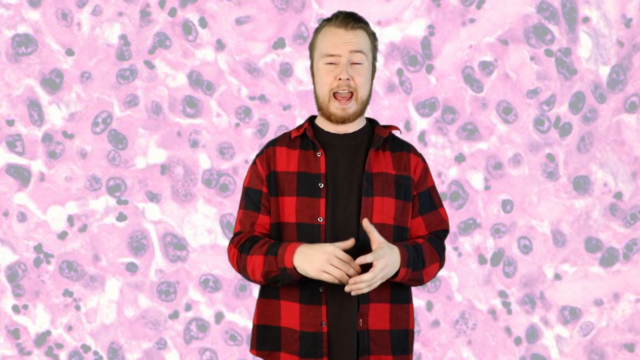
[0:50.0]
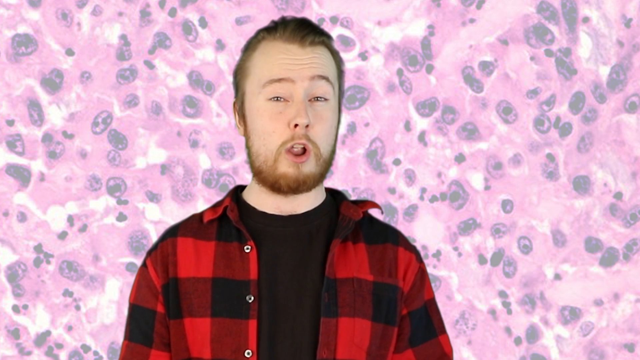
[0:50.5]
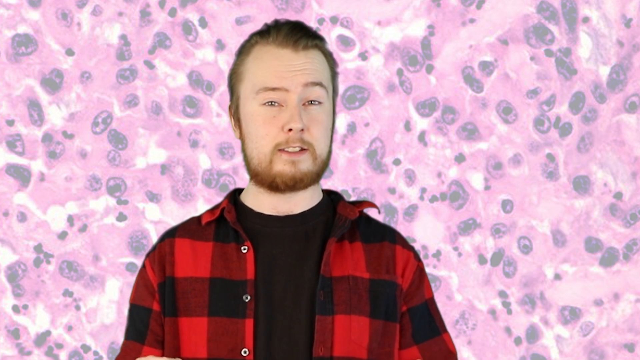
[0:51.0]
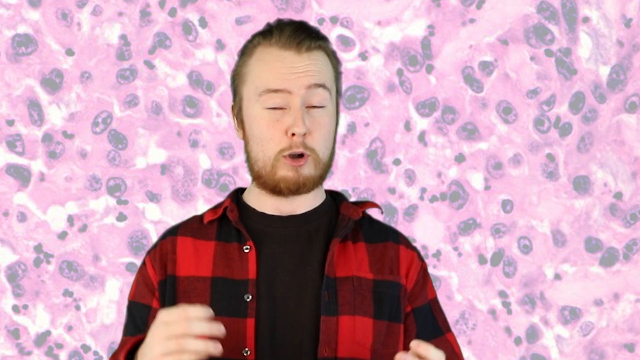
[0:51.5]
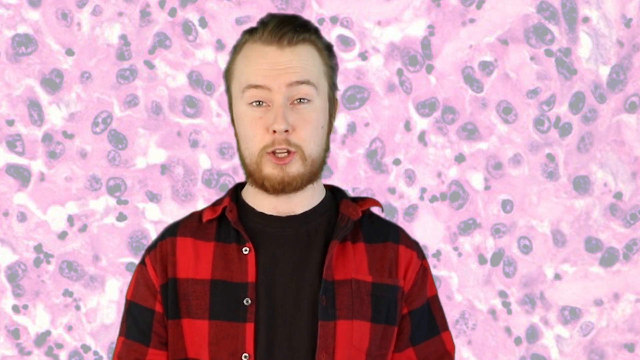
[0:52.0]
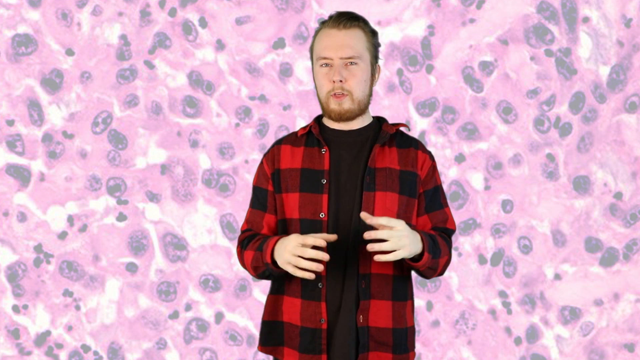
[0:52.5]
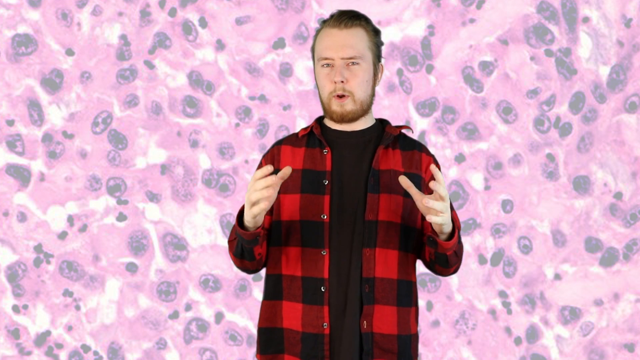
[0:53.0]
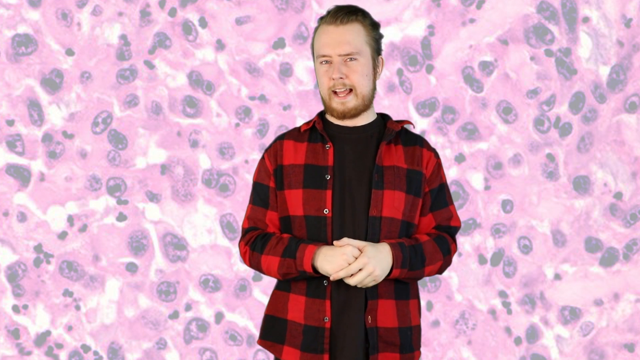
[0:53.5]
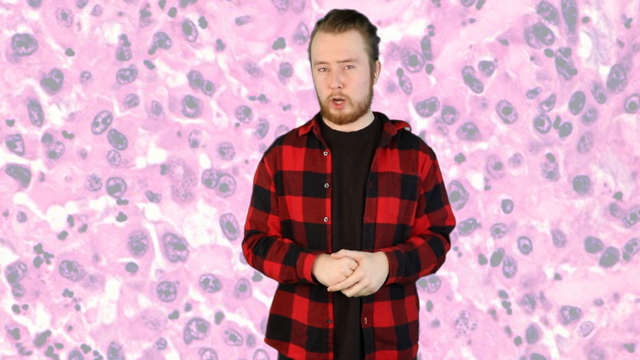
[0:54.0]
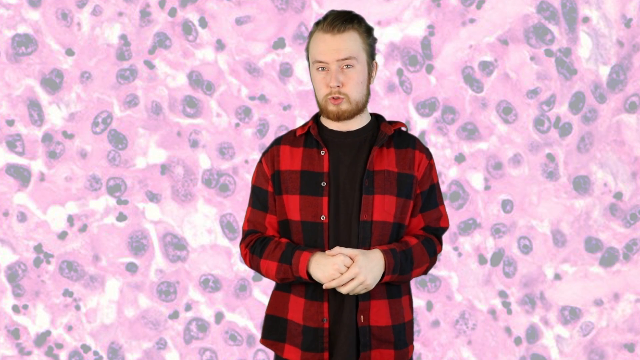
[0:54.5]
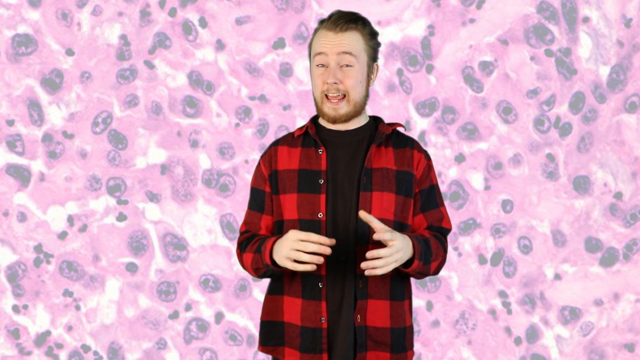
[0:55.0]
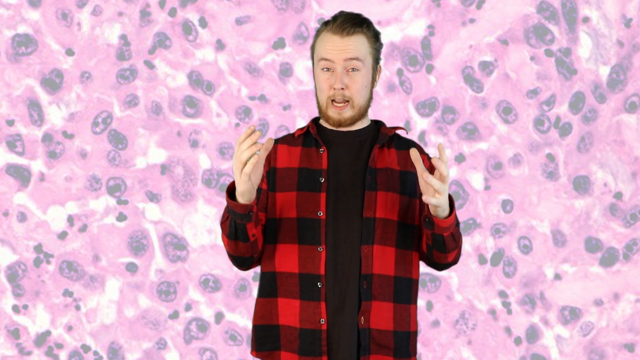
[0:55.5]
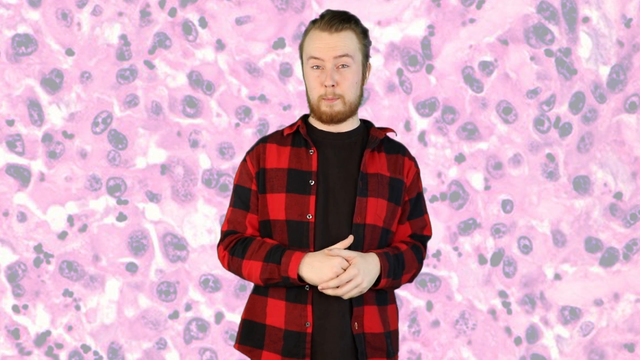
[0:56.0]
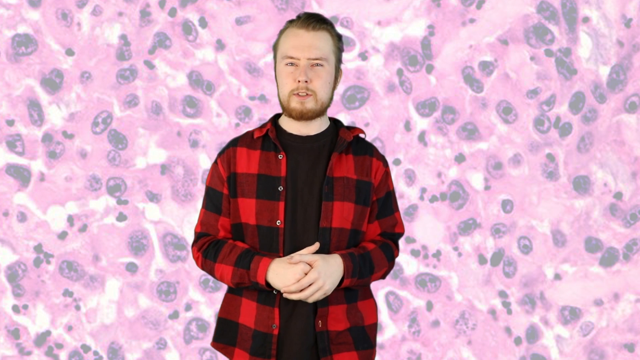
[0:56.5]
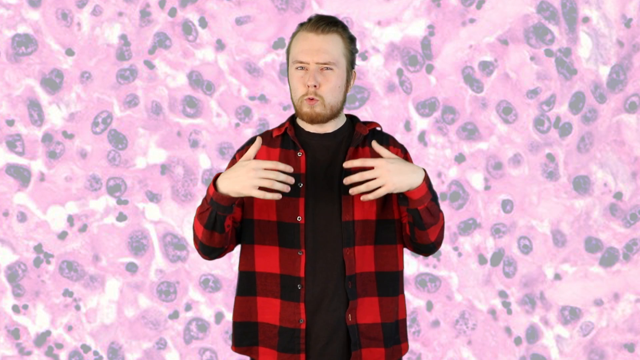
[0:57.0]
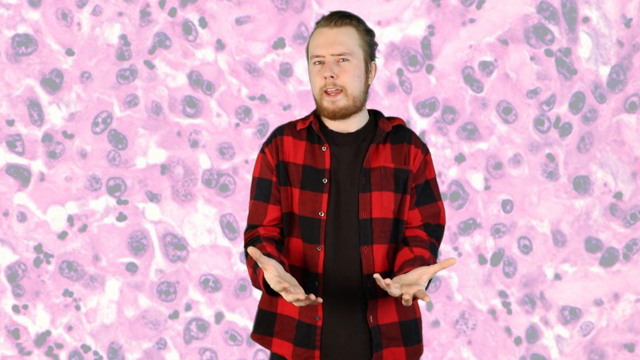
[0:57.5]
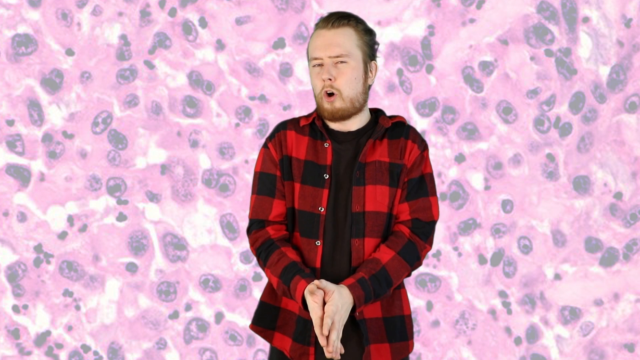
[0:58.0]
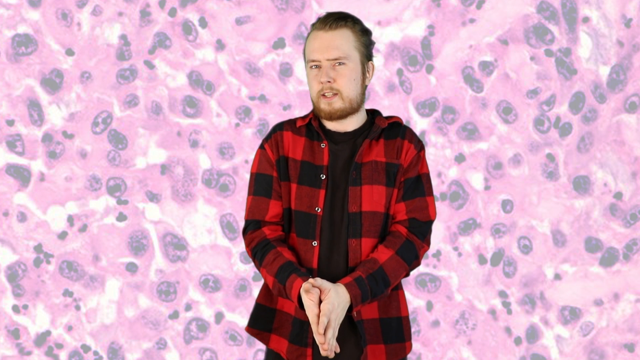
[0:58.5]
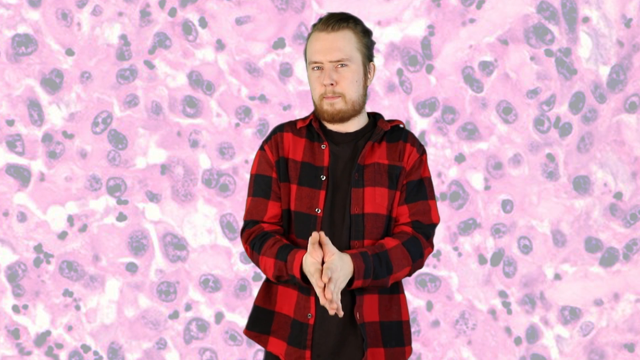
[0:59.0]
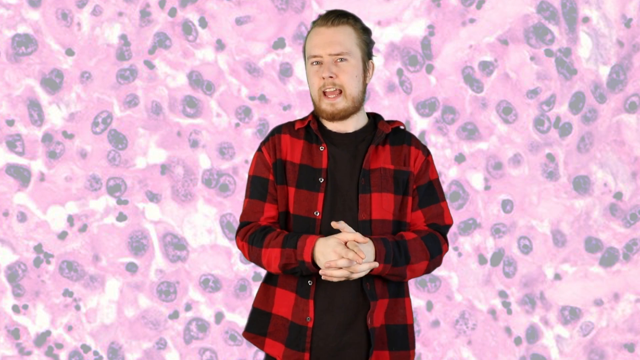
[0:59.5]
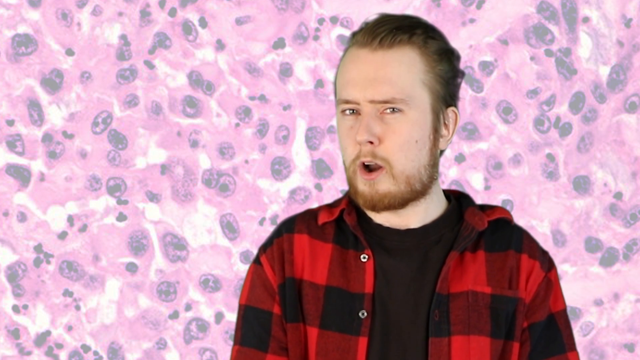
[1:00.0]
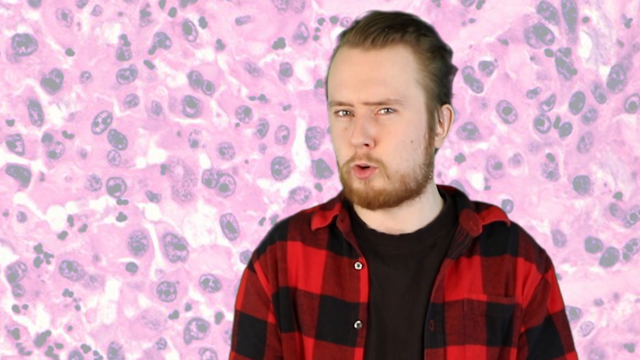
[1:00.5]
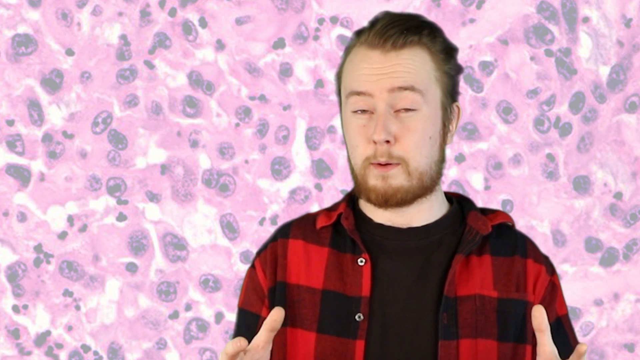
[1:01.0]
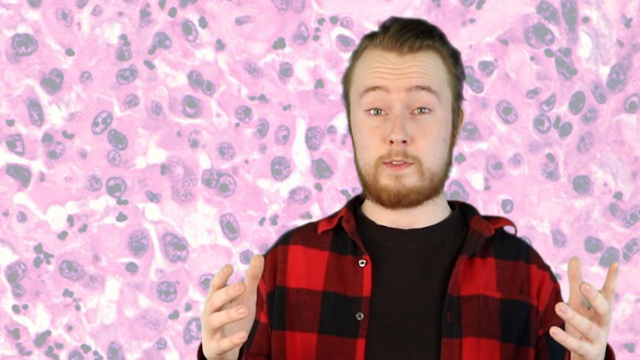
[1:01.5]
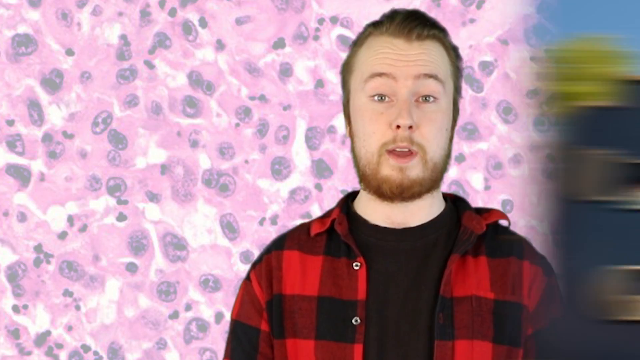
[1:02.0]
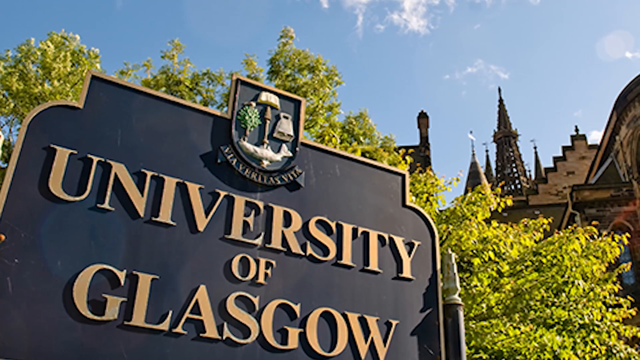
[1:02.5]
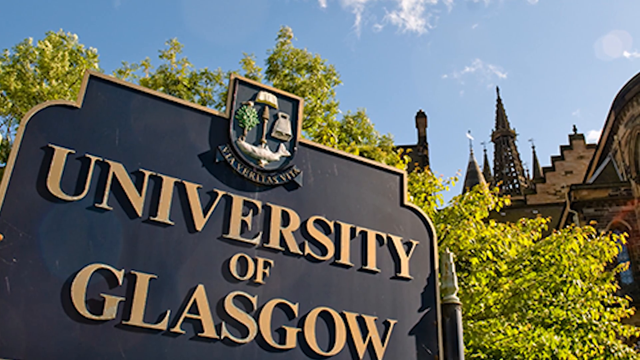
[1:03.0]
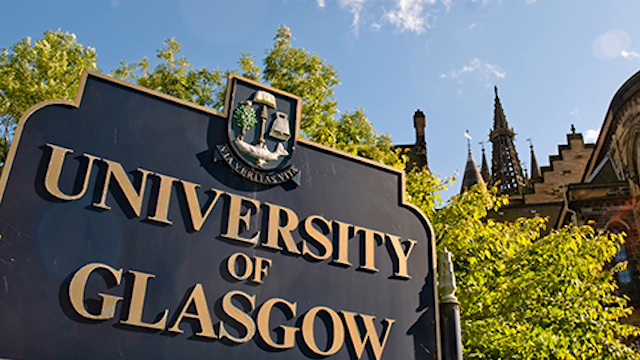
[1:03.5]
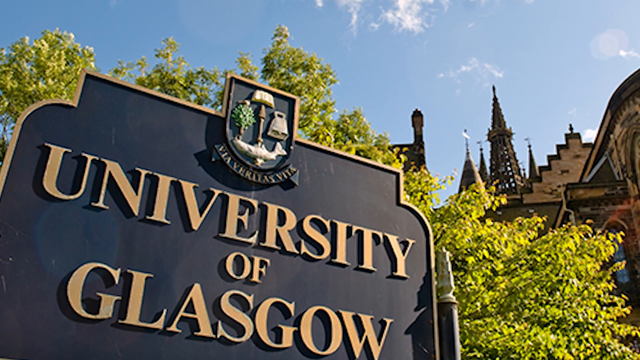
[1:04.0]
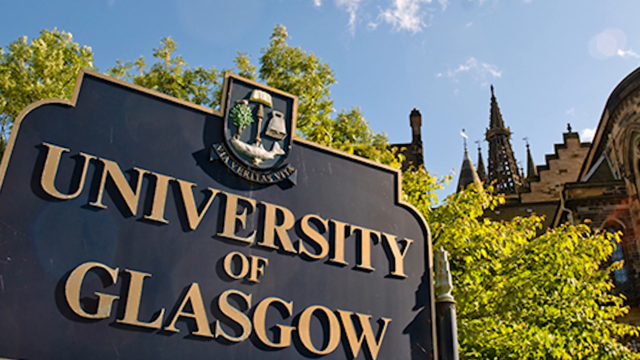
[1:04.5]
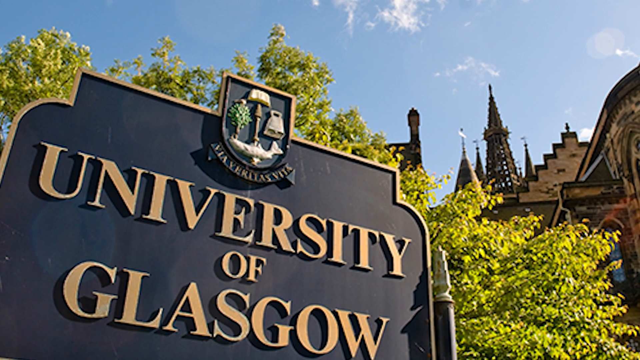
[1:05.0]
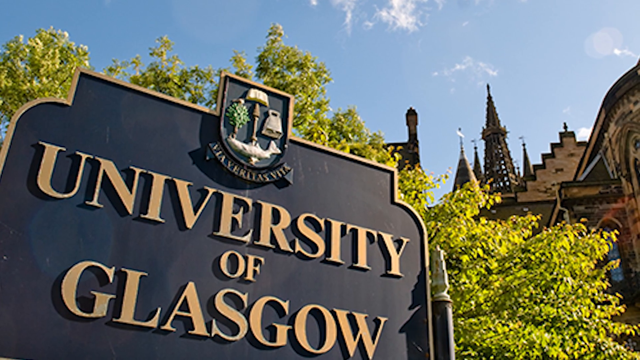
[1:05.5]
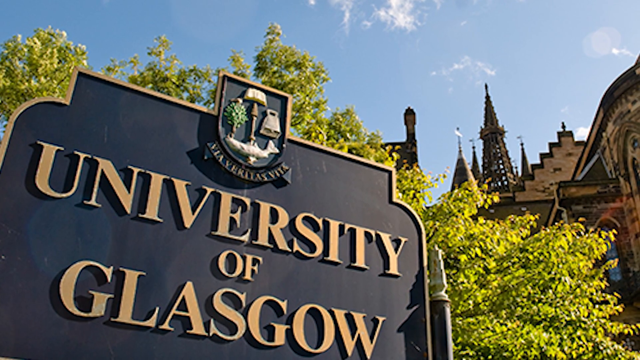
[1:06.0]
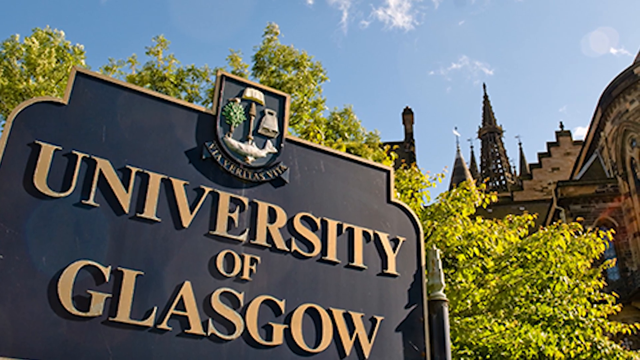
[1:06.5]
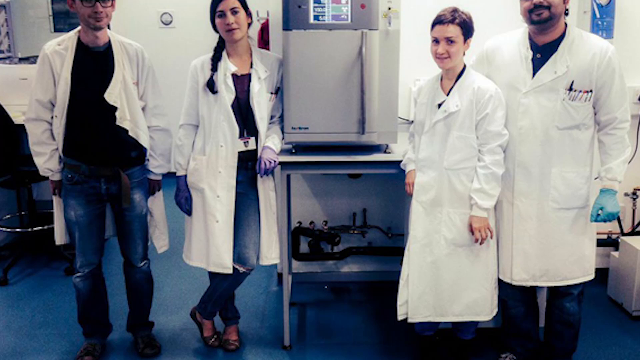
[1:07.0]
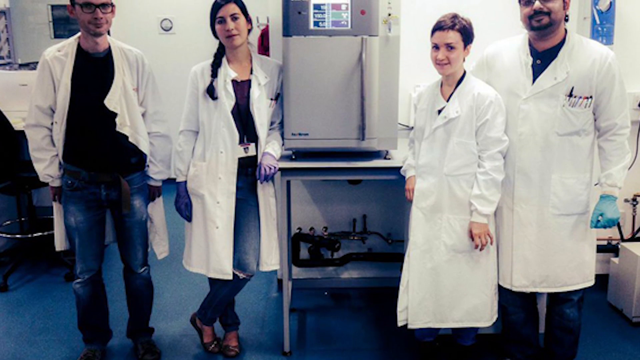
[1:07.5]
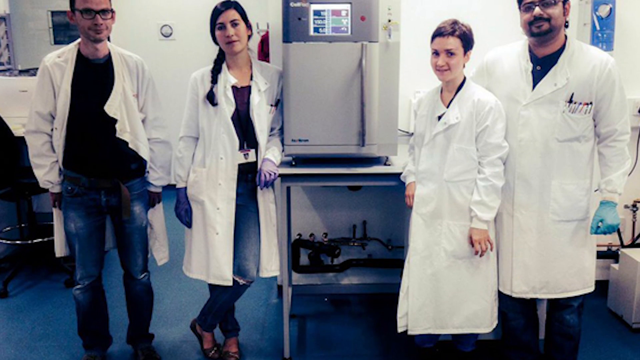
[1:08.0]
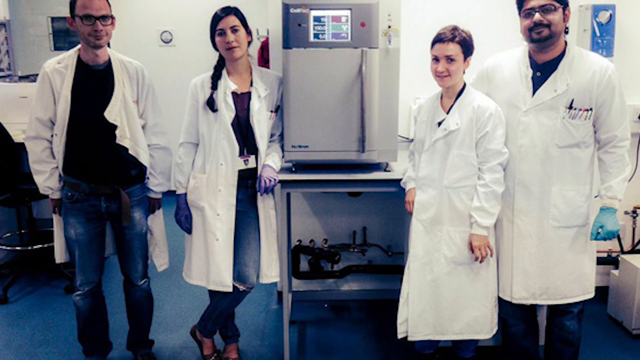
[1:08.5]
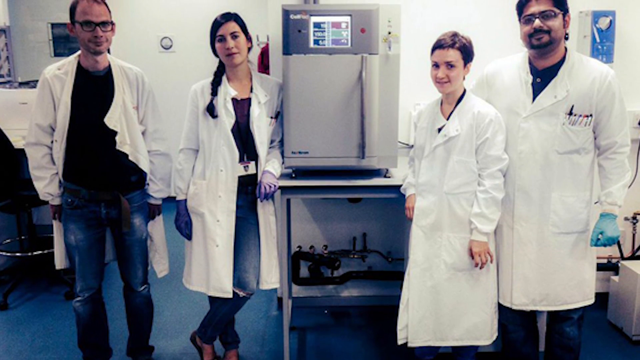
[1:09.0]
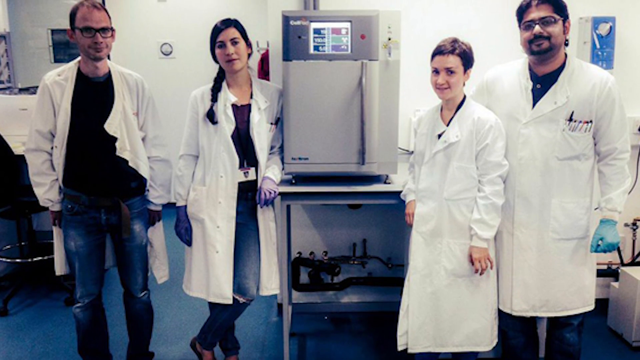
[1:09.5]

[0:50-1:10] A man stands speaking, wearing a red flannel shirt, with brown hair and a beard. On the wall behind him is what looks like a petri dish full of pink and gray colors. He talks with his hands, and the view zooms in closer to show just his head and shoulders. He is a Caucasian man with light brown hair and a full beard, speaking emphatically with his mouth moving quickly and moving his hands up and down a lot, as if kind of excited. The view zooms out again. He moves his hands back and forth, puts them together in front of him for a split second, then holds his hands out. He kind of hunches and pulls his hands up, using his whole body, then clasps his hands together in front of him. The view zooms in again on his face as he keeps talking. The video then cuts to a sign that reads "University of Glasgow". In the back on the right is a building with a tall cone shape, and a green tree is right behind the sign. Above is blue sky with a few clouds. Next comes a shot of four people in white coats who appear to be inside a laboratory, with some kind of machine in the middle of them that looks like a tiny refrigerator.